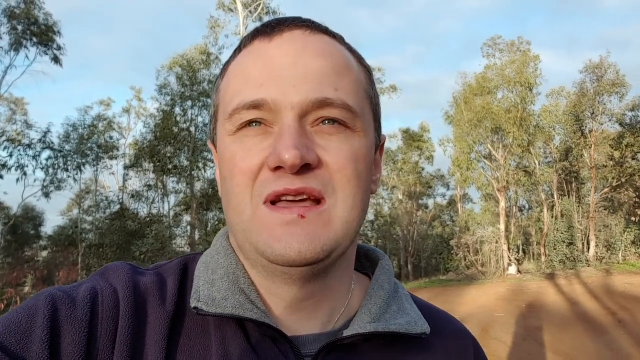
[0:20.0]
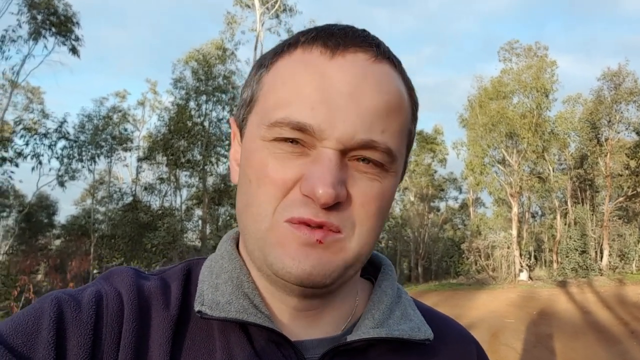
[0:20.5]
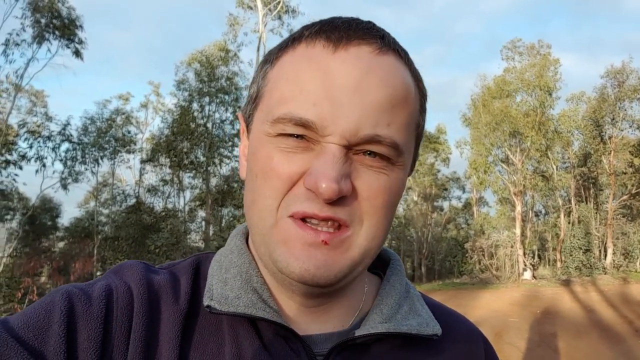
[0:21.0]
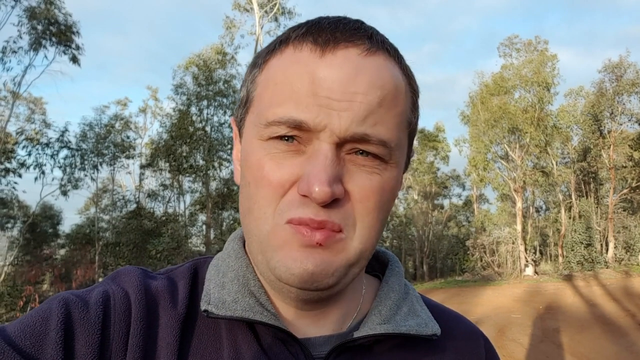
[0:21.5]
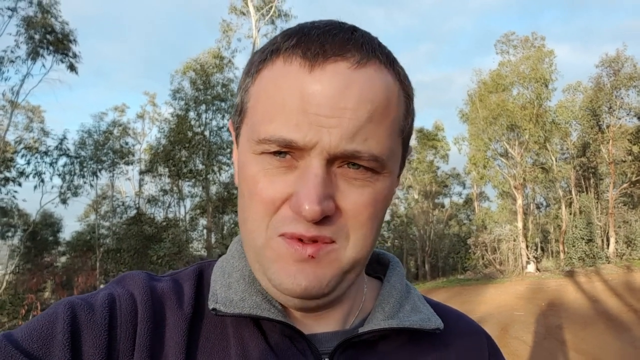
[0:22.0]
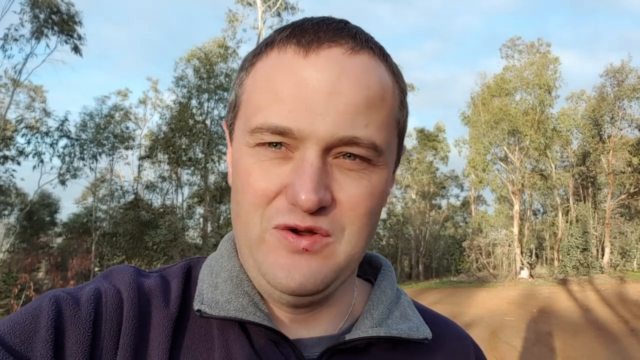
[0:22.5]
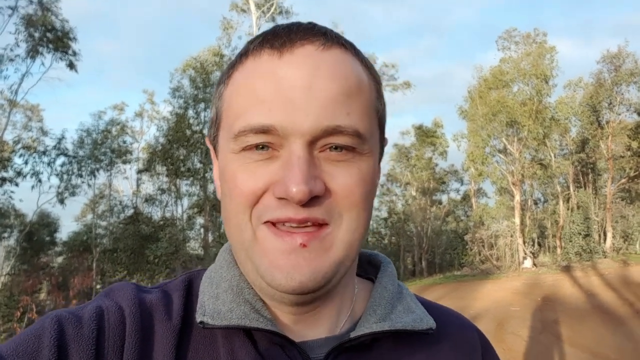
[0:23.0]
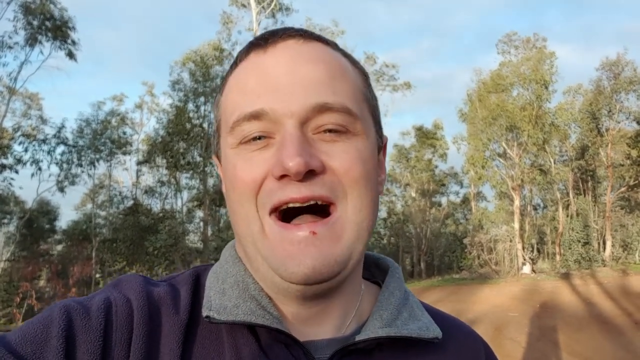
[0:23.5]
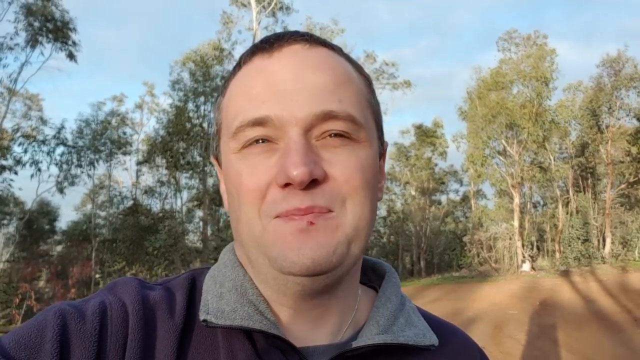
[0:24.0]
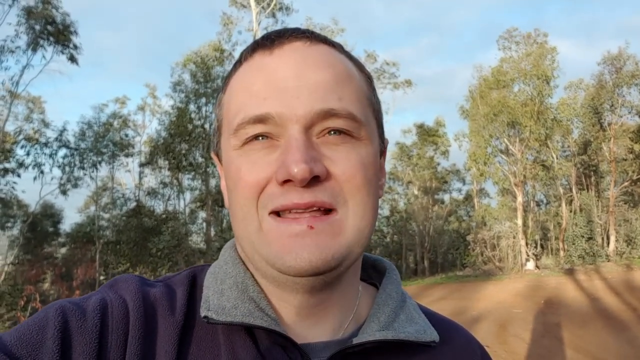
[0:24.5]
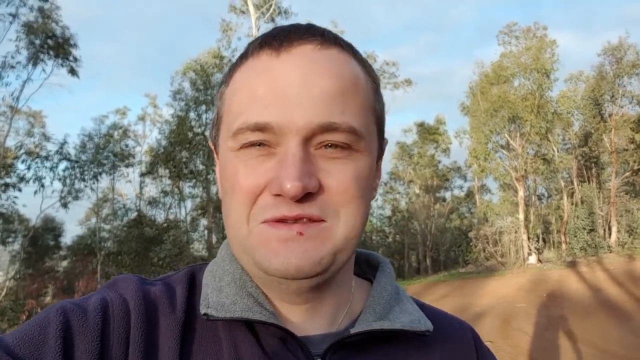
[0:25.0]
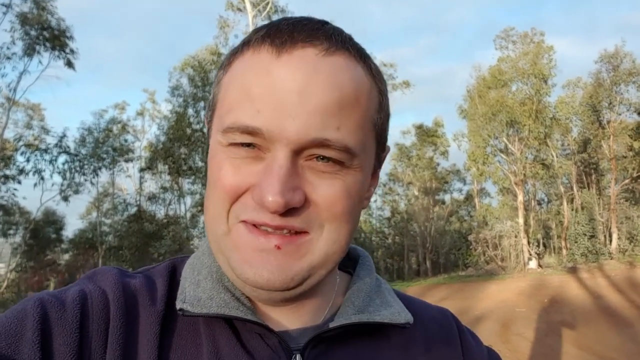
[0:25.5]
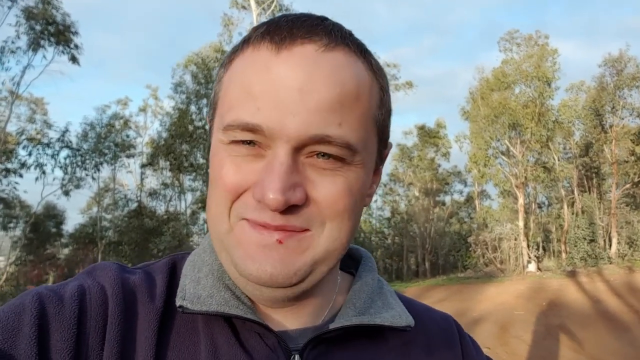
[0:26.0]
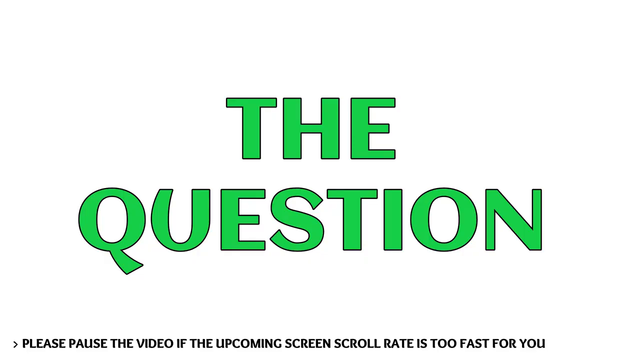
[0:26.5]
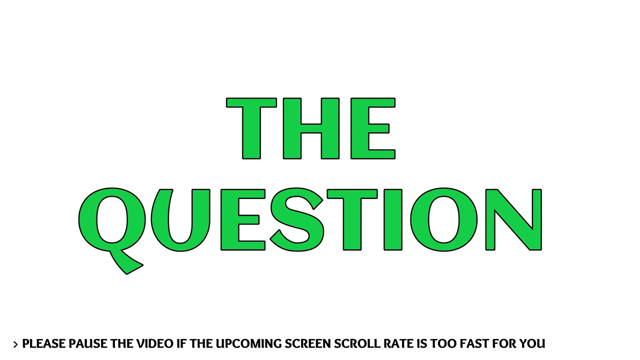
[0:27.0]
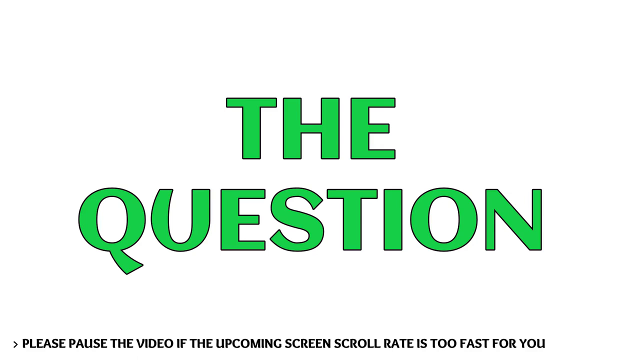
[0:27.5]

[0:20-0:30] A man in his mid-30s talks into the camera. He is a white male with short brown hair that is gray on the sides, light-colored eyes, and a cut on his bottom lip. He holds the camera selfie-style toward himself, showing him from the shoulders up, and wears a blue coat with a gray collar. He is standing in the middle of an outdoor field with dirt on the ground and trees in the background. He looks at the camera and at some points looks up above it. It is a clear day; the sky is light blue with no clouds, and it appears to be sunny. The screen then pans to a white background with lime green bubble letters that say "the question," with nothing else on the screen; this stays up for about two seconds.